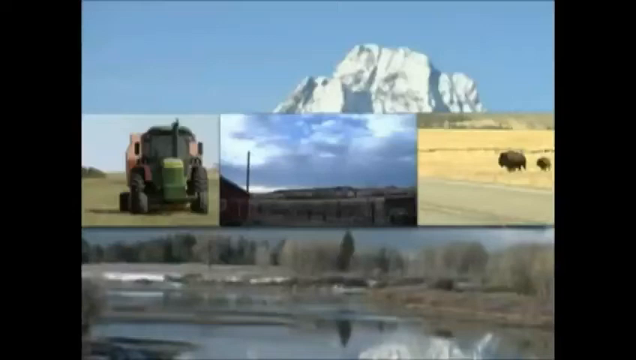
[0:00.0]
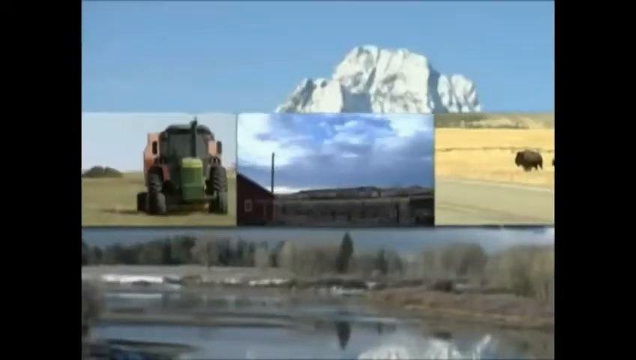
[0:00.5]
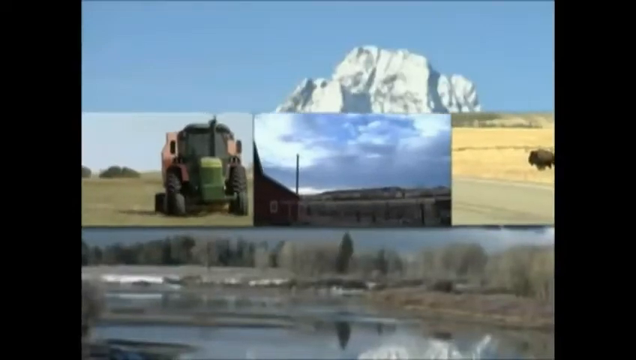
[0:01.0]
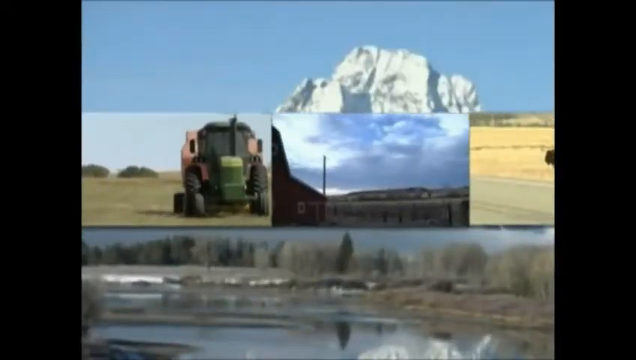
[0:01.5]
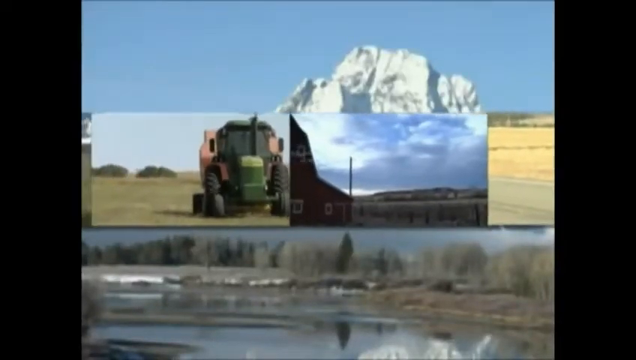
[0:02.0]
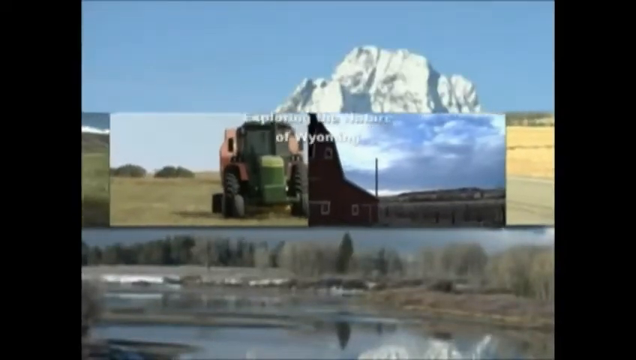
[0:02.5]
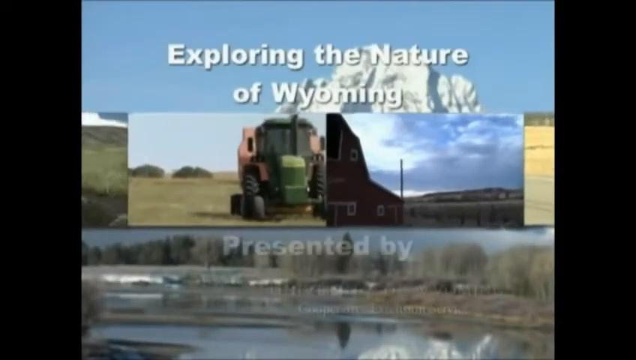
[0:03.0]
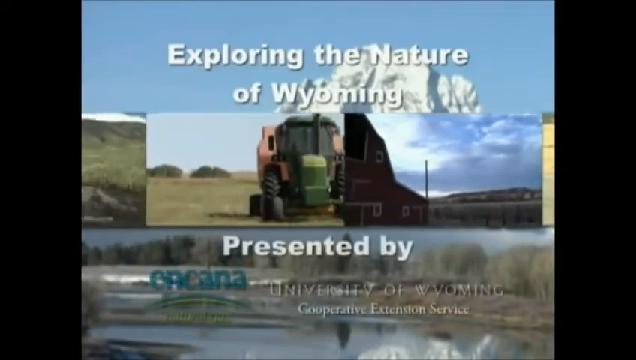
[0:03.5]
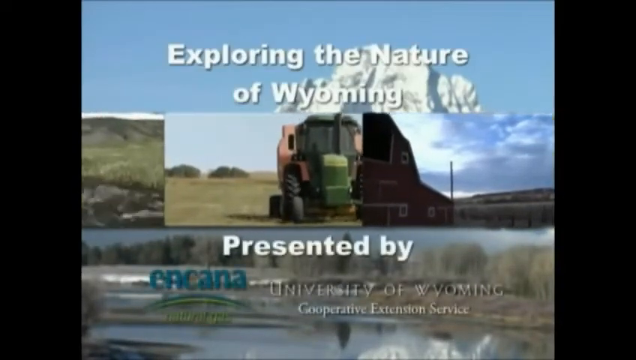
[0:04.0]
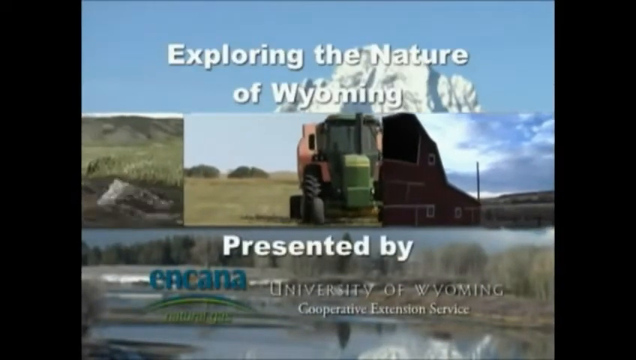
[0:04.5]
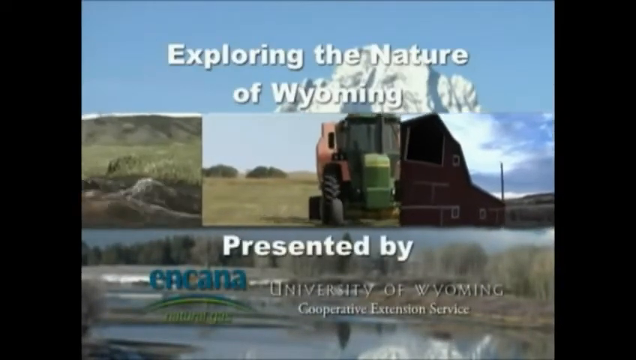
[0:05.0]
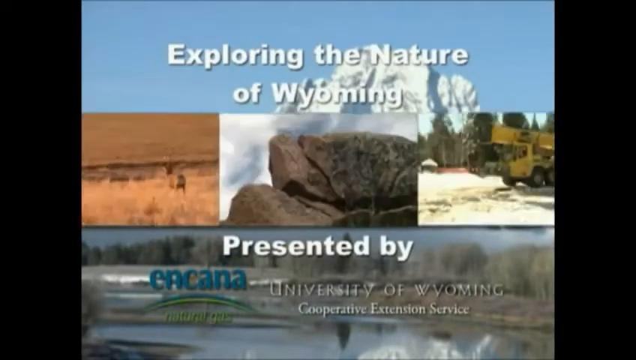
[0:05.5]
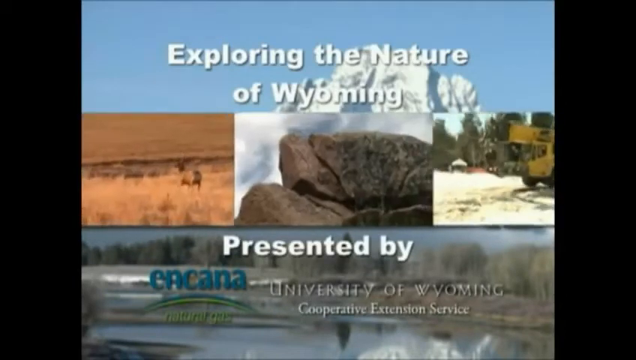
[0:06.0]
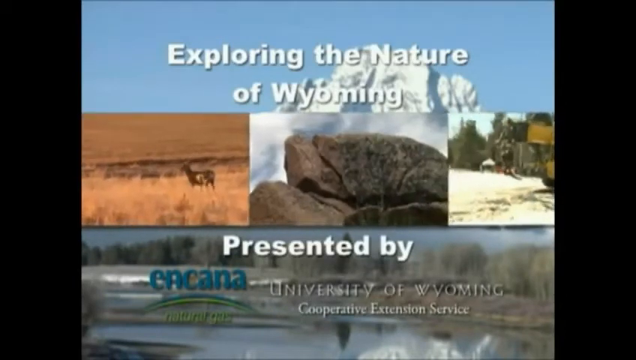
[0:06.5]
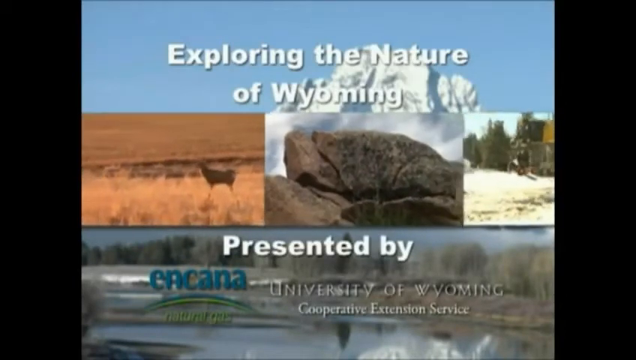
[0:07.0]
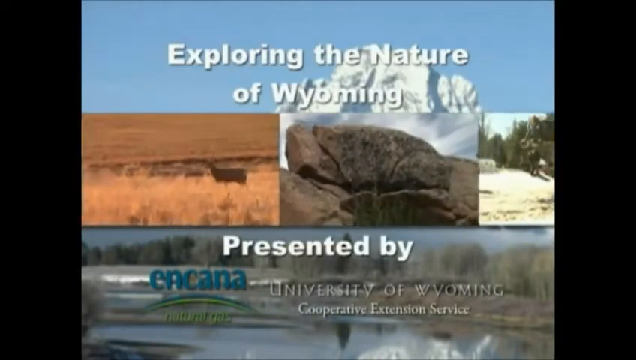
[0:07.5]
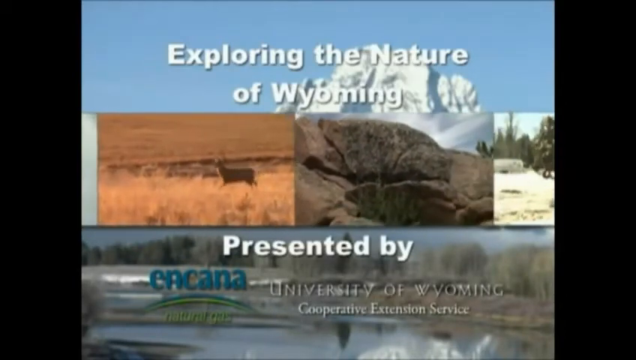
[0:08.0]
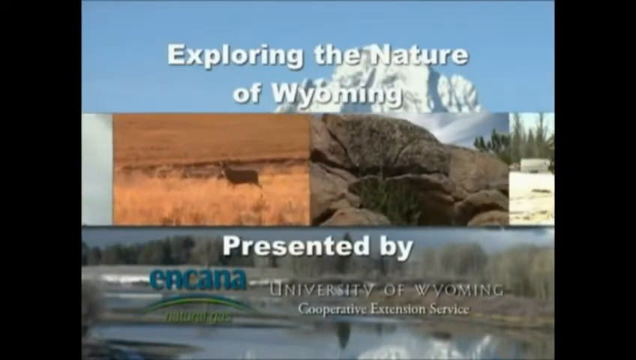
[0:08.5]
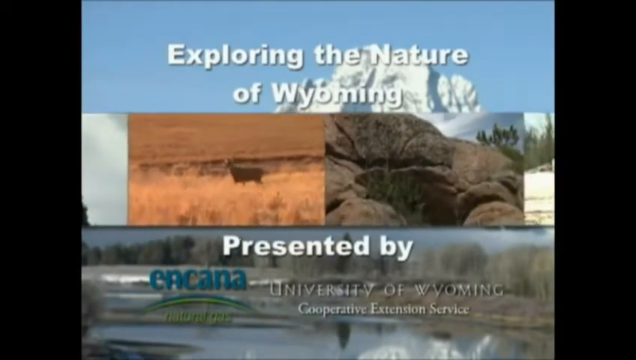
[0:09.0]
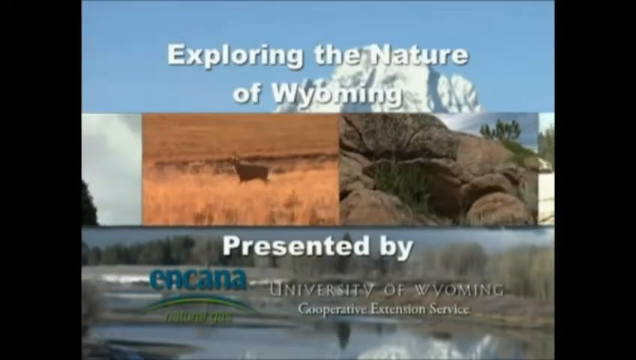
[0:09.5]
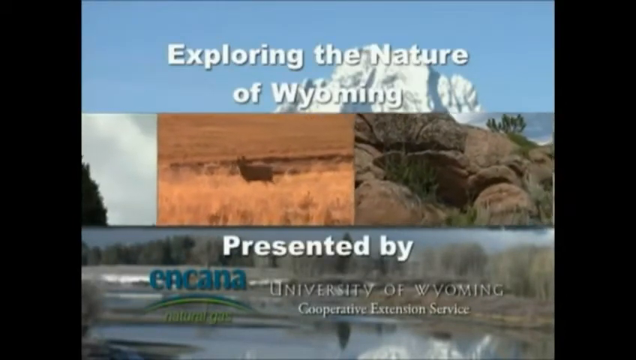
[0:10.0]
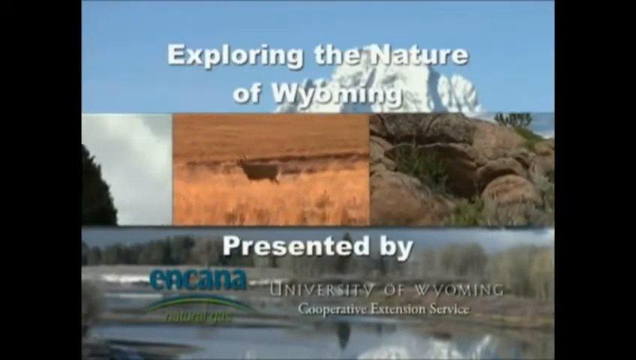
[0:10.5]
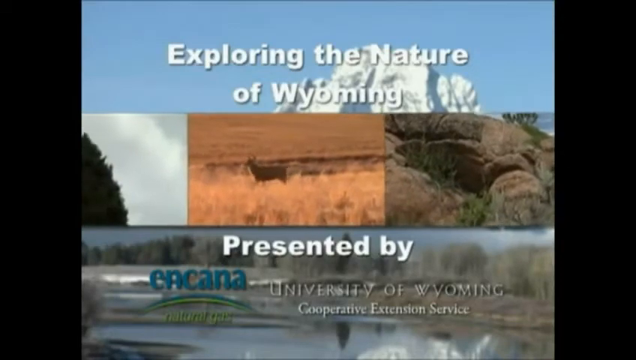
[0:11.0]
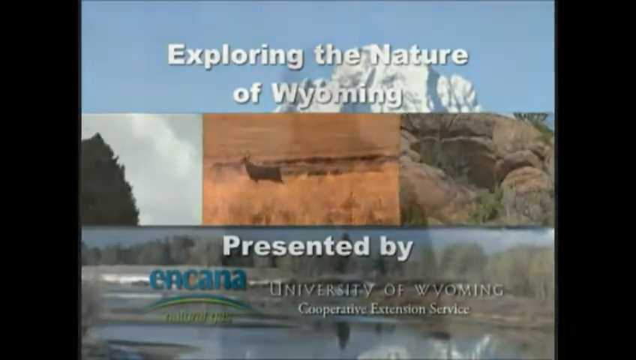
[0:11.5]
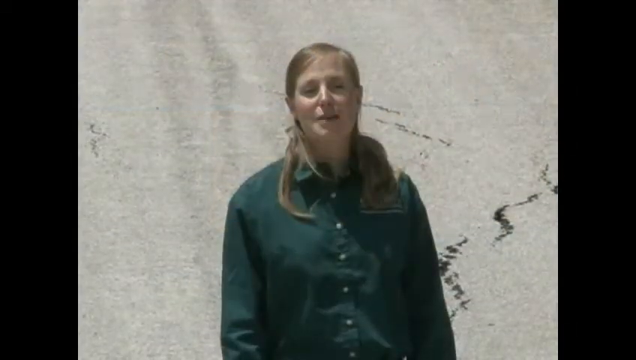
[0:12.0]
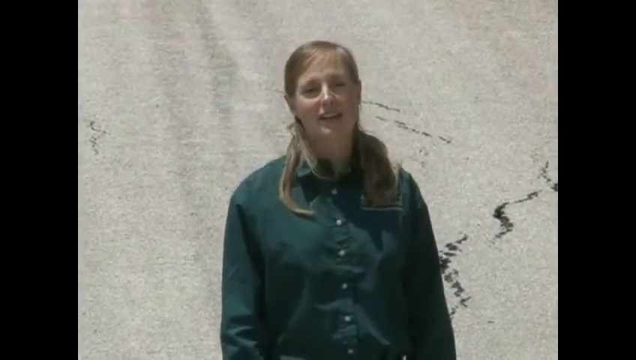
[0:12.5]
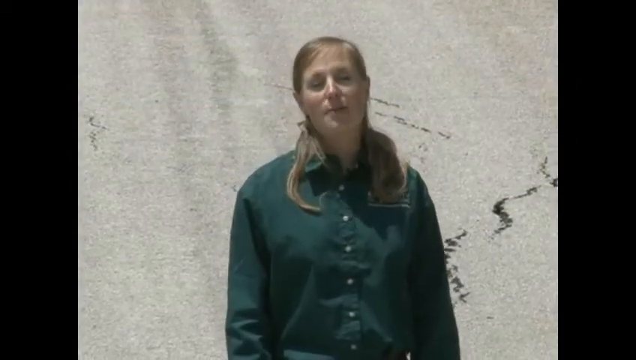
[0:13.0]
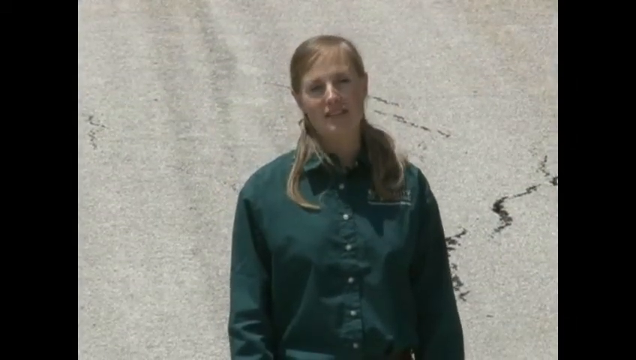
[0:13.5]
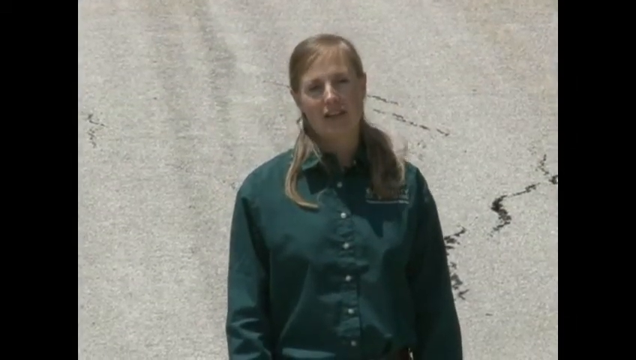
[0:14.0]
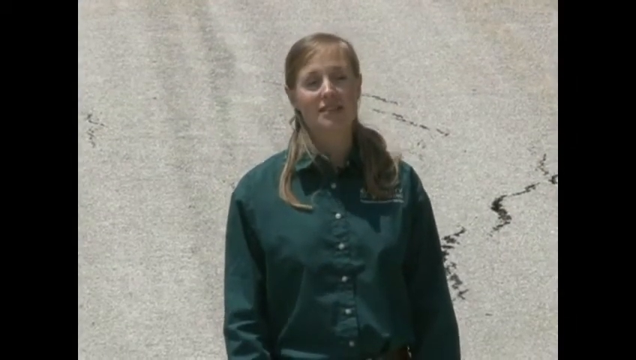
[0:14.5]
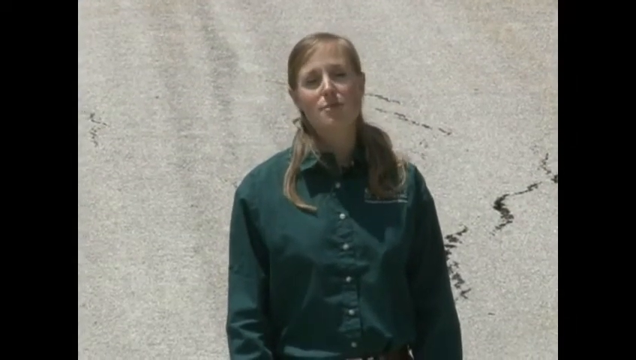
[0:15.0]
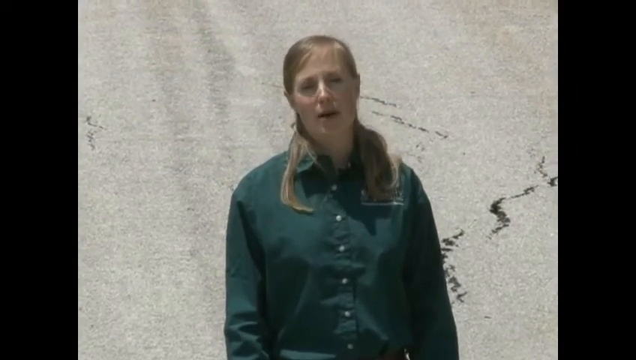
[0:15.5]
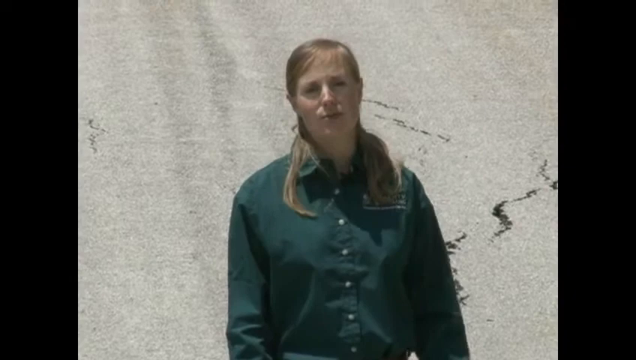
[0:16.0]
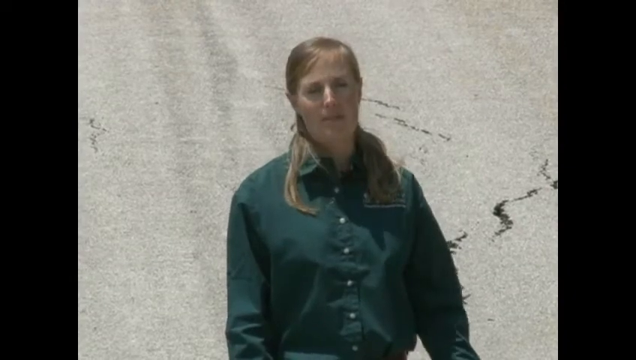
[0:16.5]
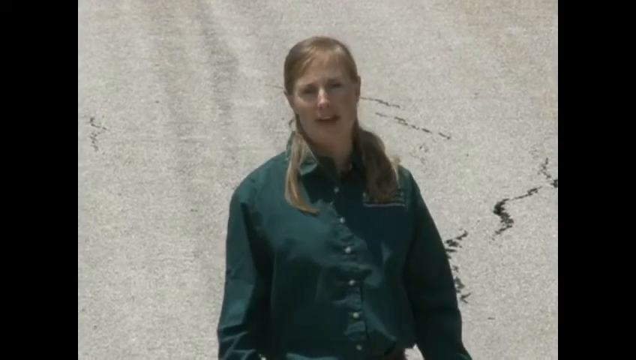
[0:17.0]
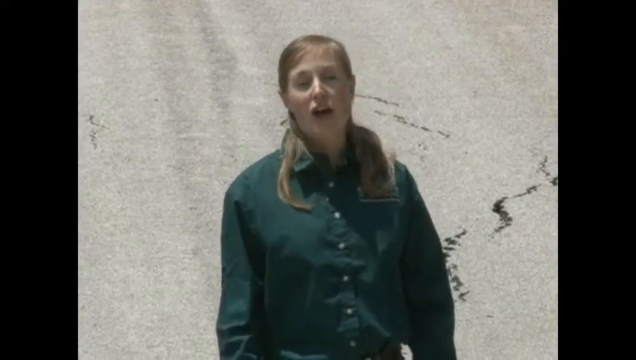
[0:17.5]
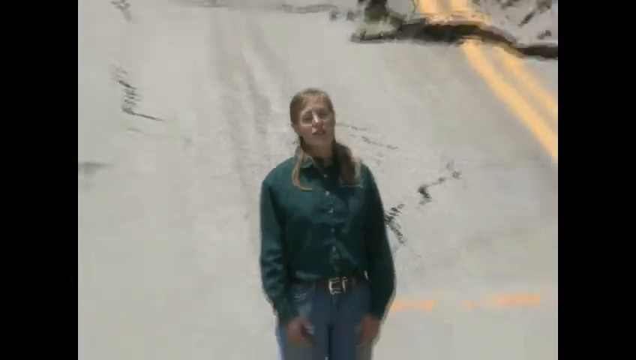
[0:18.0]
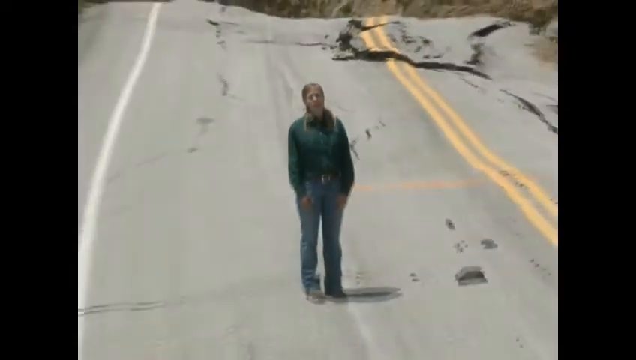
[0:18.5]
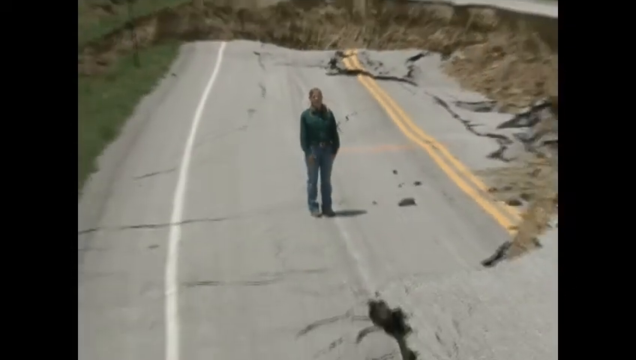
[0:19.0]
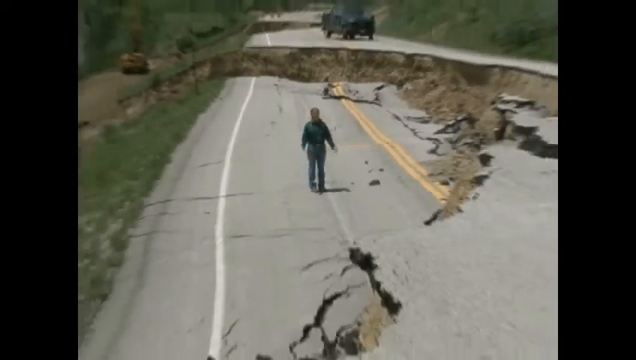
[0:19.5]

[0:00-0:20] The video begins with various nature clips. The top picture appears to be an iceberg, and there are bison or buffalo on a range, what looks like hills, a tractor shot, and another landscape nature shot. The middle band moves around and the title appears: "Exploring the nature of Wyoming, presented by Incona, University of Wyoming Cooperative Extension Service." More pictures roll in, including excavating equipment, deer and rocks. Then a woman appears in a green long-sleeved button-up shirt. She has an odd hairstyle: long blonde hair cut with bangs, looking like a plastered-down 1960s boy's haircut, yet with hair hanging from the back around her neck almost to the top of her chest. She is standing in front of a broken, busted-up road. As the view moves further back from her, it looks like erosion on a two-lane road has busted a gap through the road, and she is standing there, apparently talking about it.